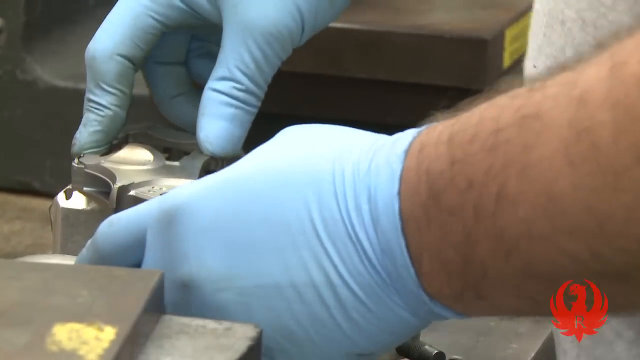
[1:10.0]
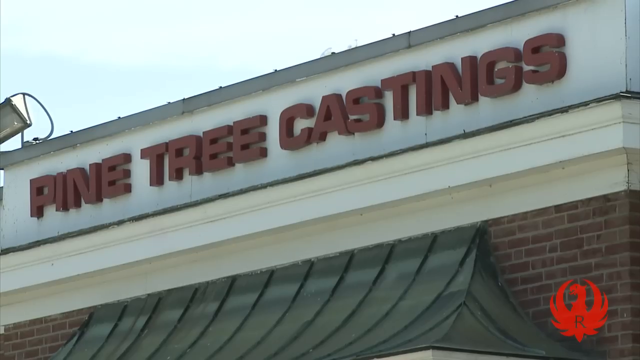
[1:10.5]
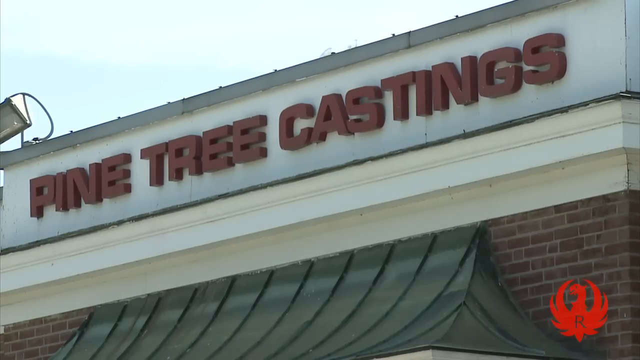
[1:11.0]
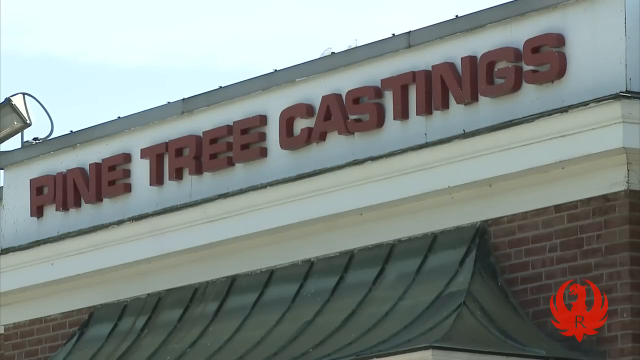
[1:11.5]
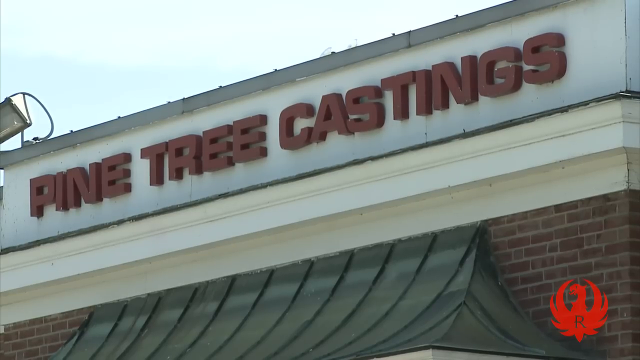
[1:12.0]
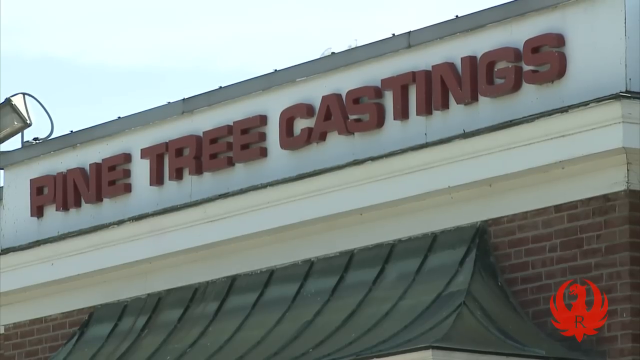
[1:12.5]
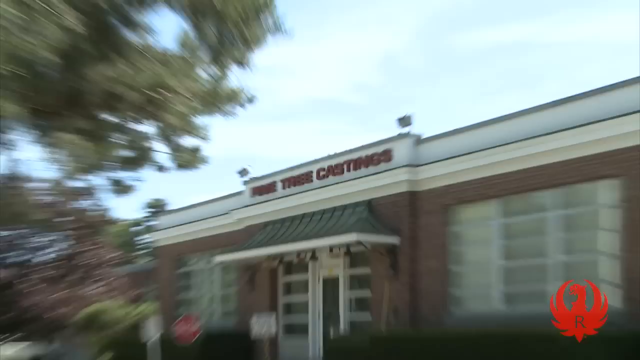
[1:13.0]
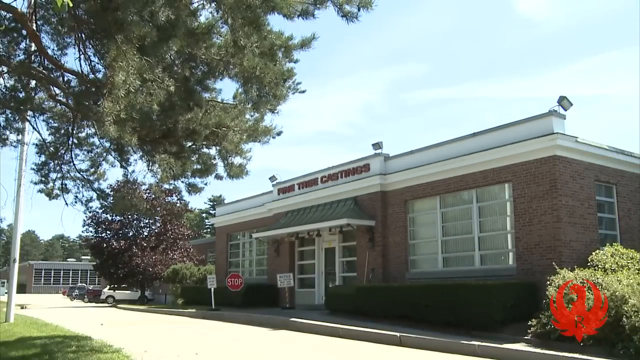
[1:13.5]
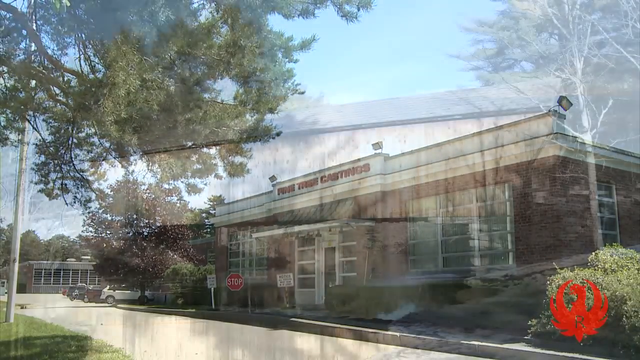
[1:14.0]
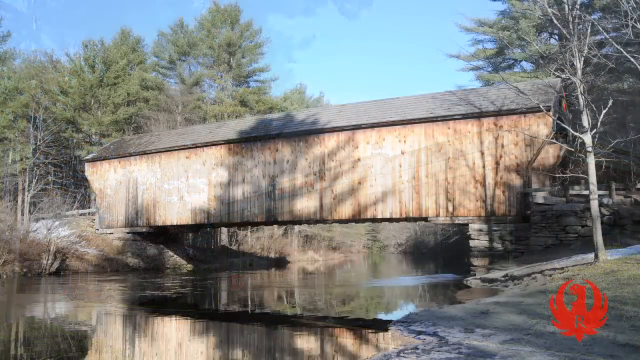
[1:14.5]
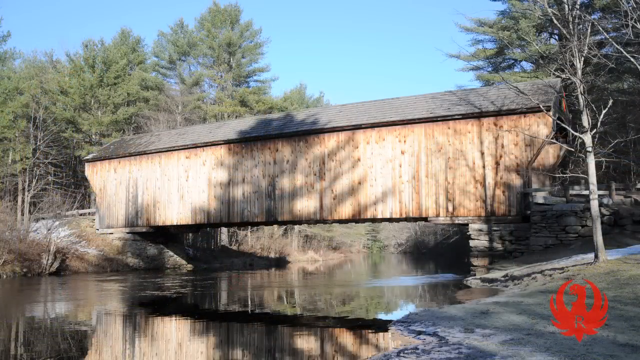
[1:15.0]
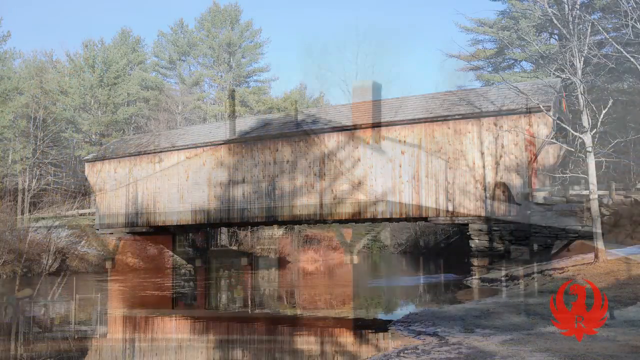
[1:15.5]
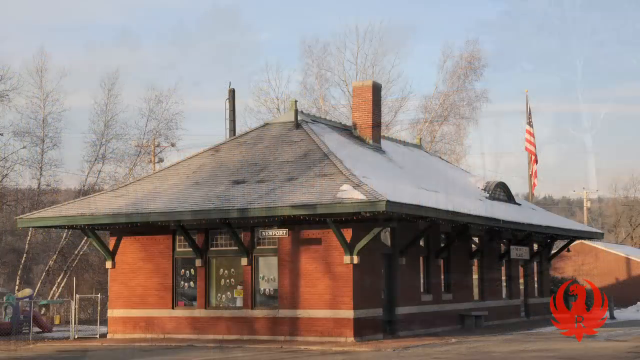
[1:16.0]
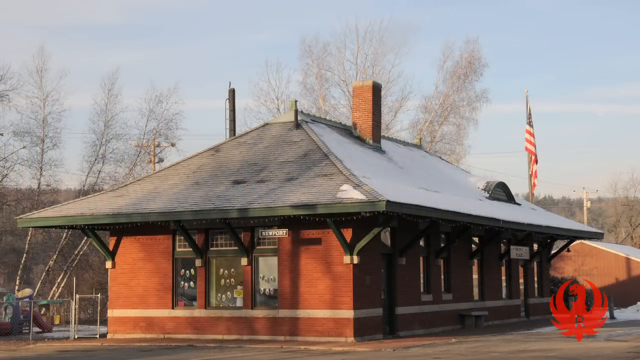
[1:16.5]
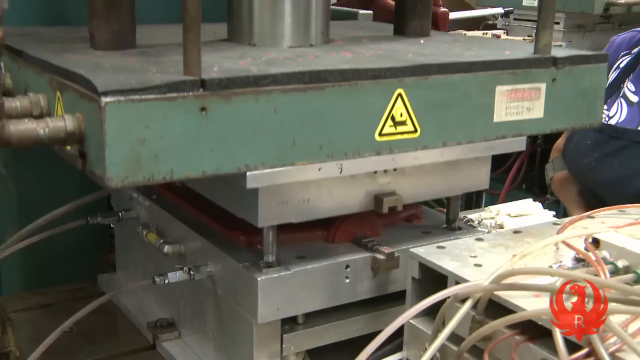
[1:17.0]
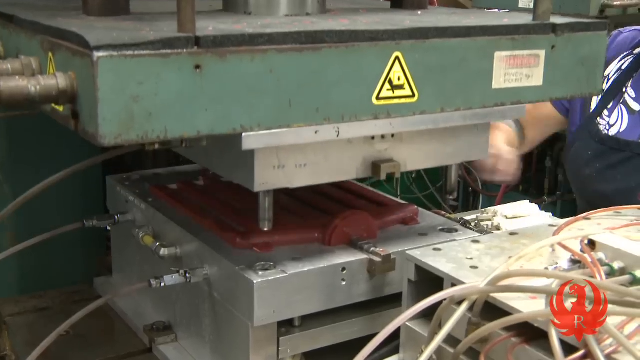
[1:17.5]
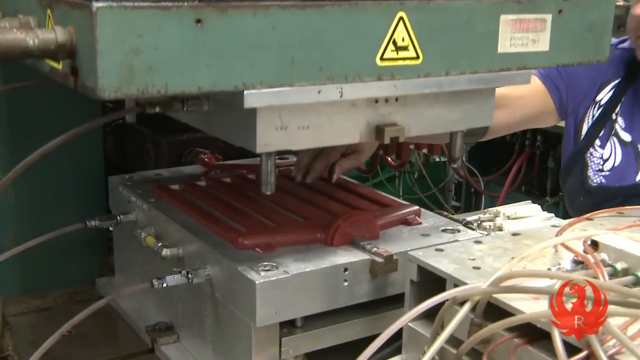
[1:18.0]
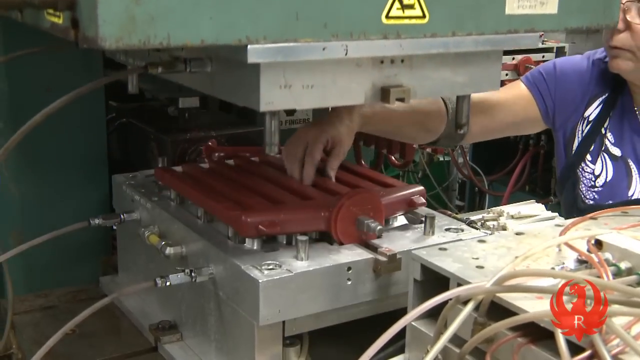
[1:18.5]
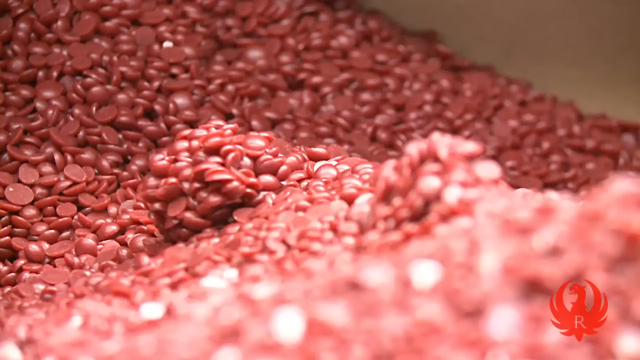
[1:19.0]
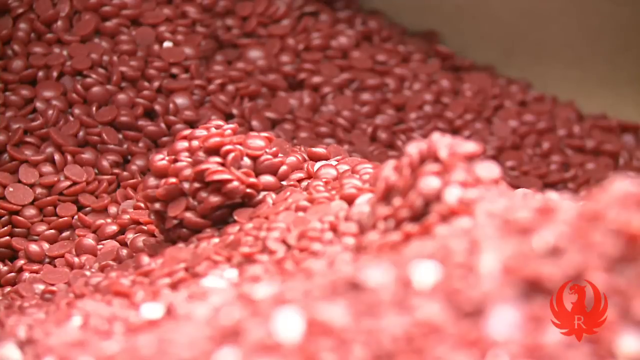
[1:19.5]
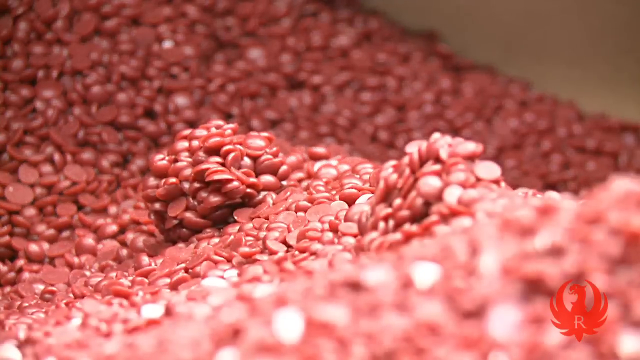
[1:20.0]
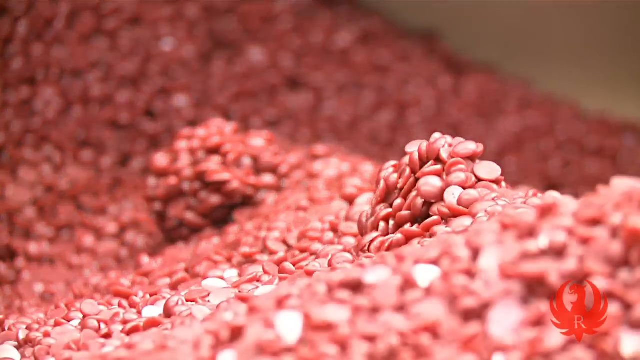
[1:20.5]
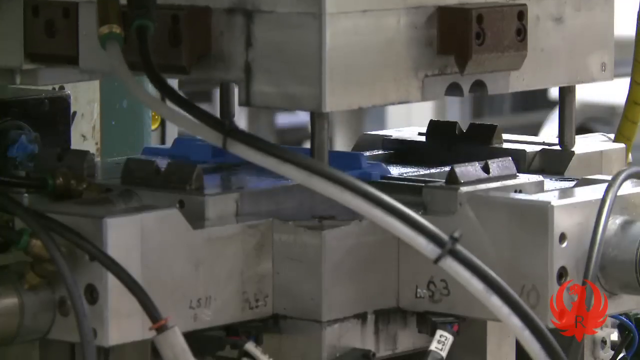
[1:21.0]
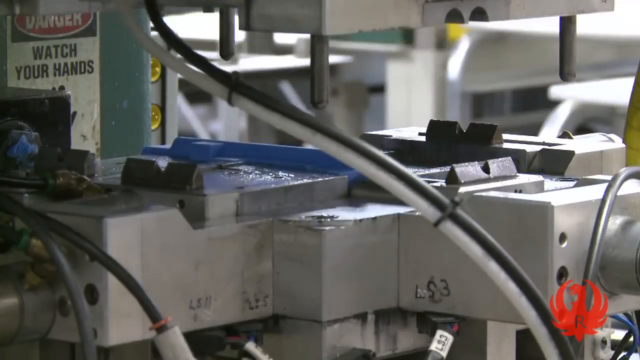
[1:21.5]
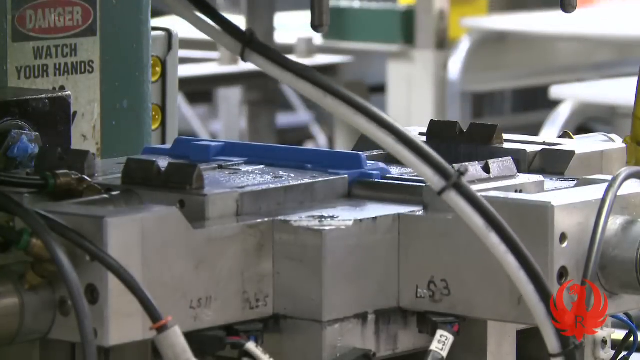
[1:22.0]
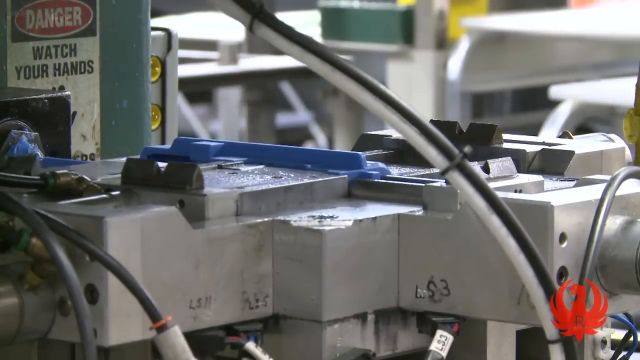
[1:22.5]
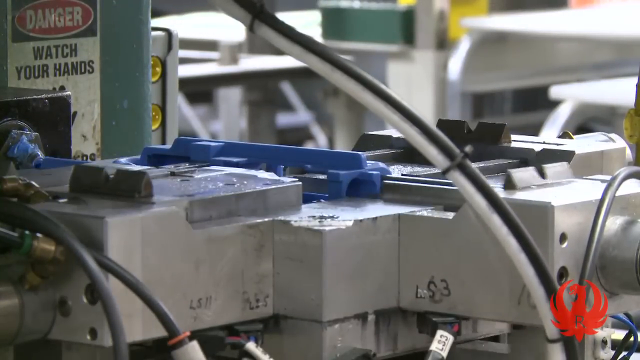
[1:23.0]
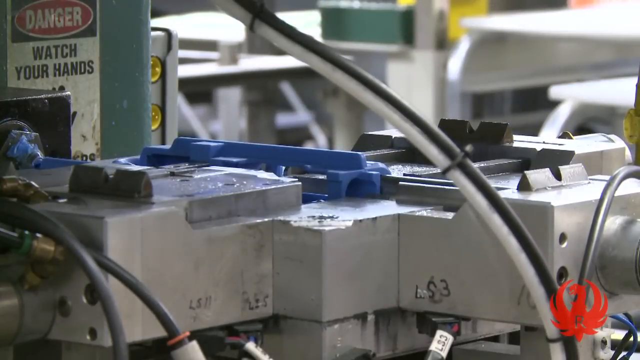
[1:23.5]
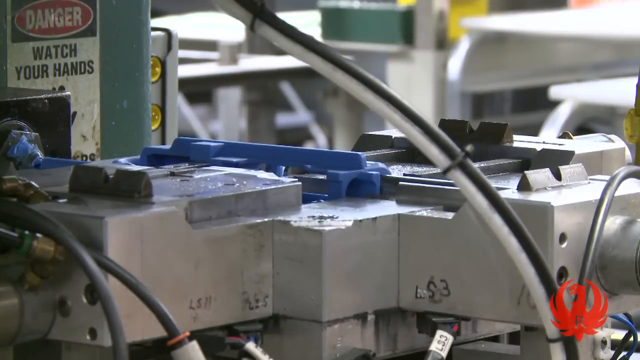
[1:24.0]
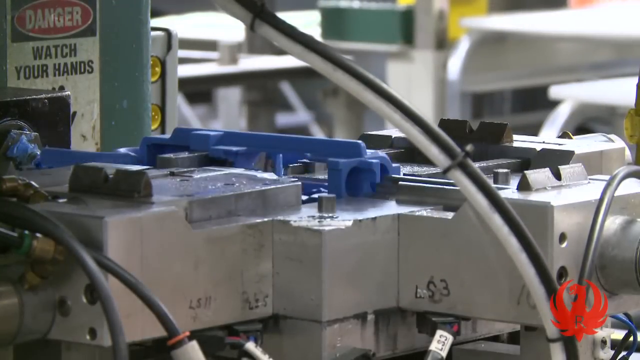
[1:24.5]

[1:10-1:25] Pine Tree Castings seems to be making the wax molds for Ruger, possibly as a different company from Ruger. A factory for Pine Tree Castings is shown, with "Pine Tree Castings" on the outside of the building. There appear to be wax chips that get melted, a machine making a wax mold, some red chips, and another machine making a blue wax mold. The outside of the building is shown, then a covered bridge, then a red brick building that almost looks like a train station.